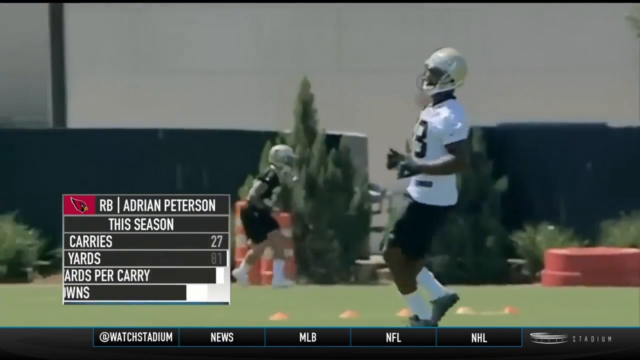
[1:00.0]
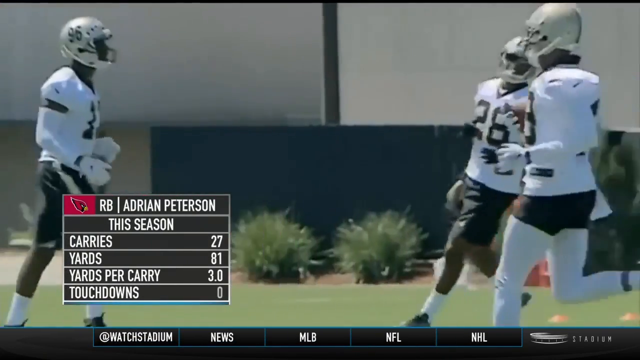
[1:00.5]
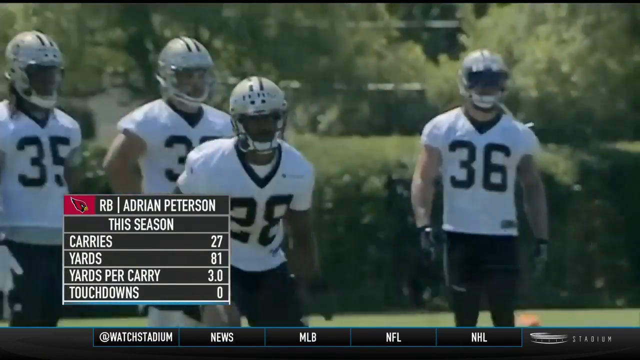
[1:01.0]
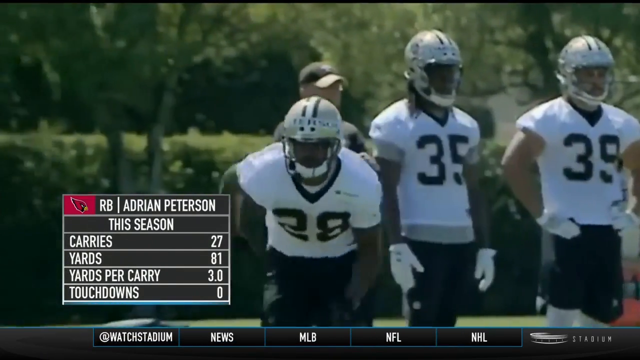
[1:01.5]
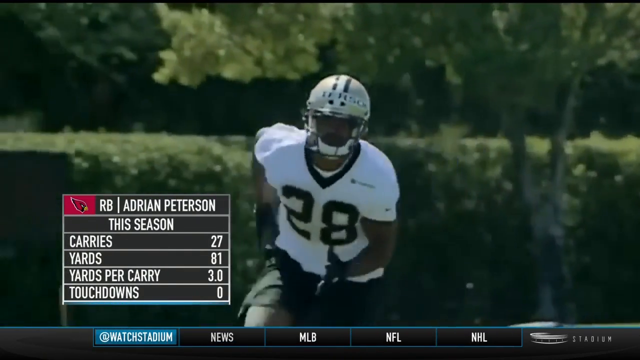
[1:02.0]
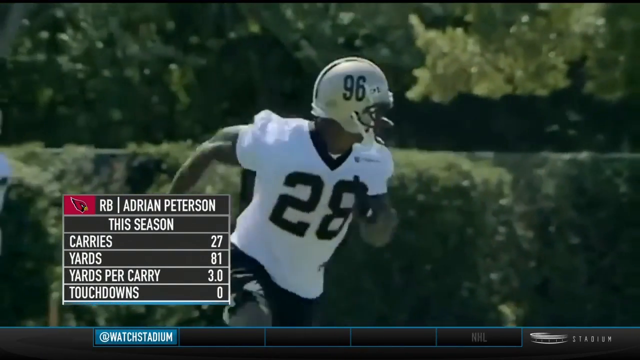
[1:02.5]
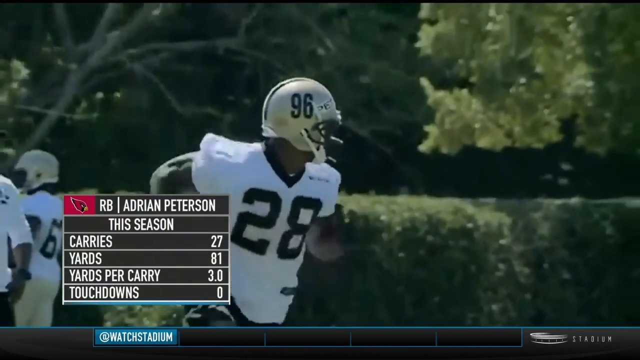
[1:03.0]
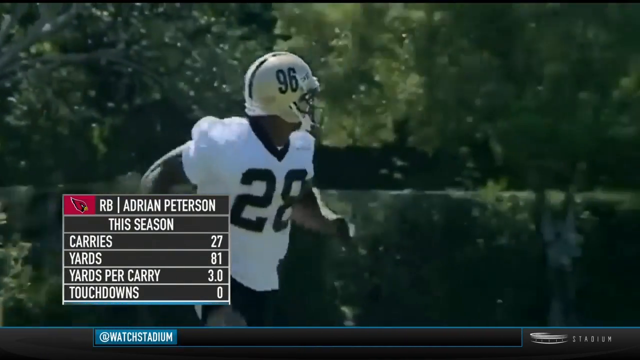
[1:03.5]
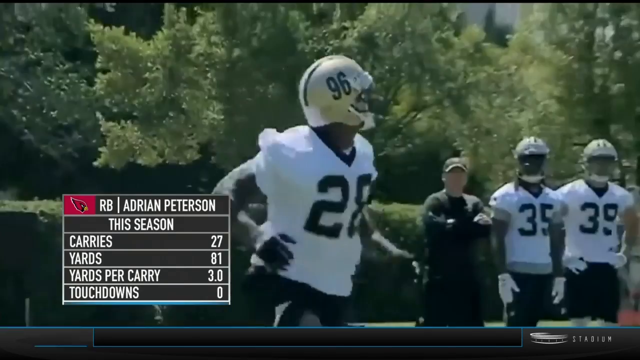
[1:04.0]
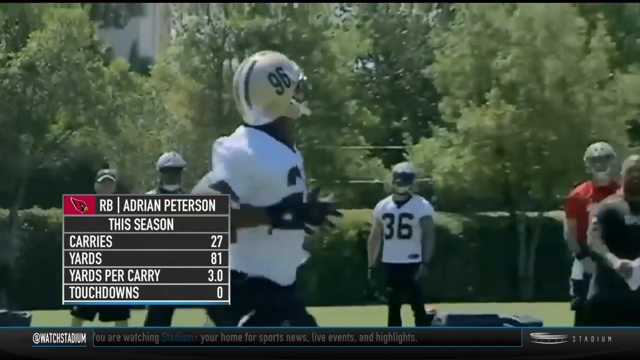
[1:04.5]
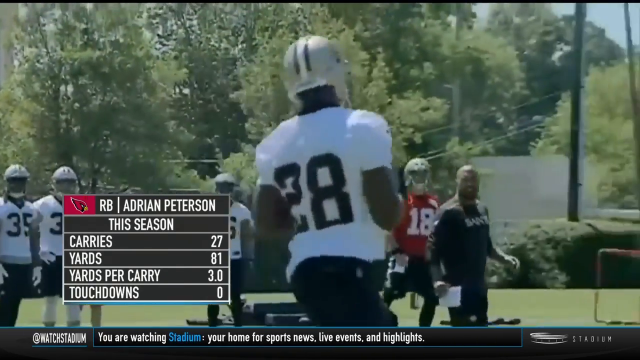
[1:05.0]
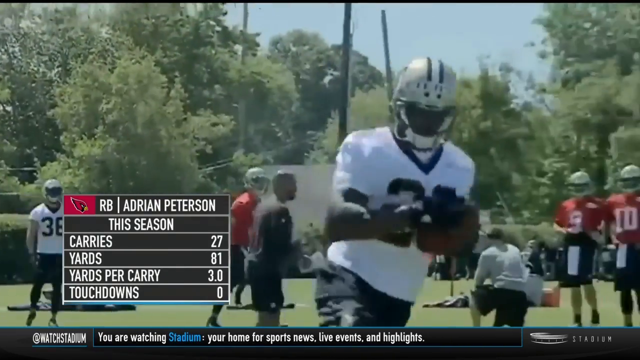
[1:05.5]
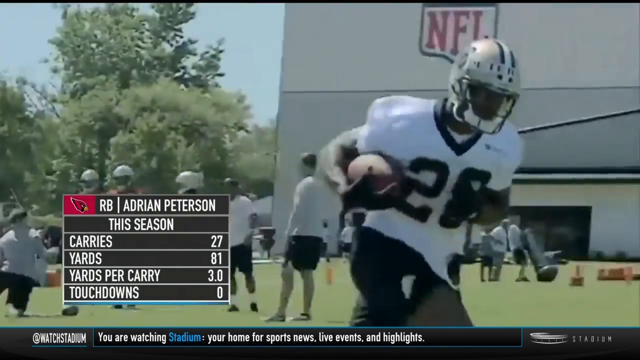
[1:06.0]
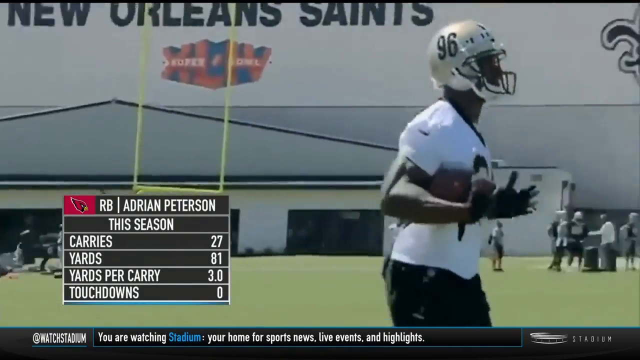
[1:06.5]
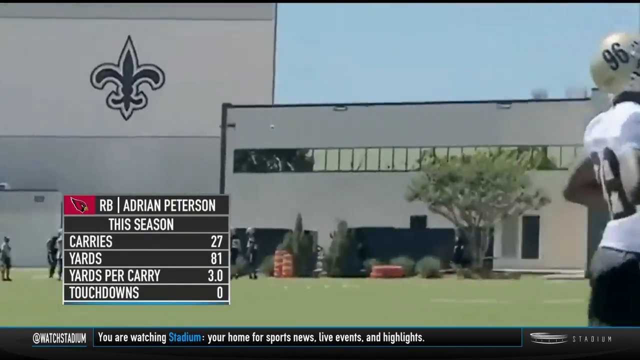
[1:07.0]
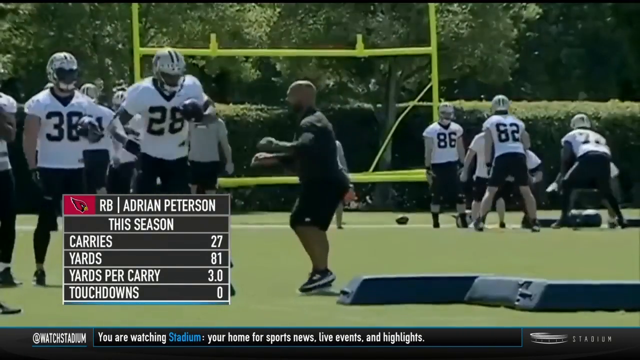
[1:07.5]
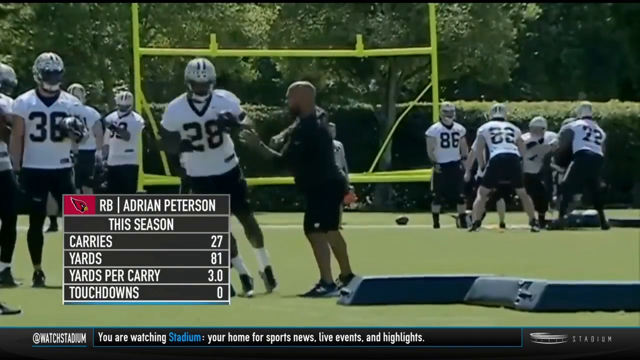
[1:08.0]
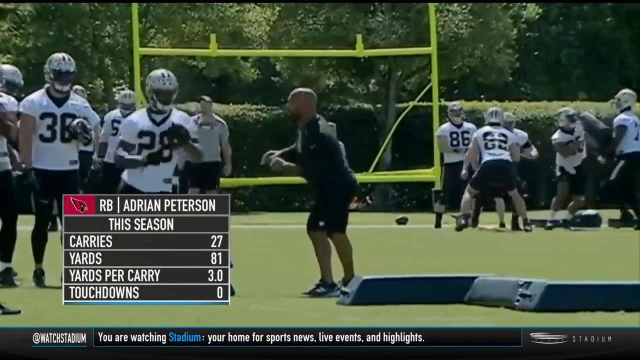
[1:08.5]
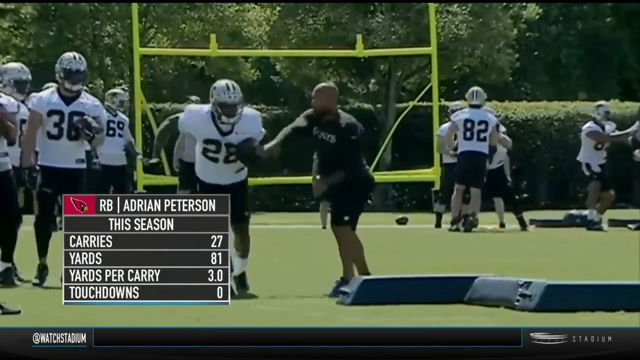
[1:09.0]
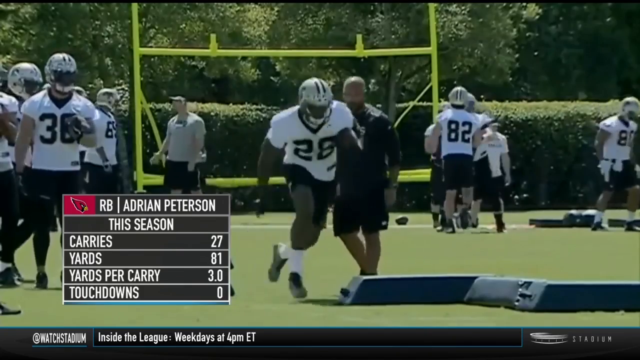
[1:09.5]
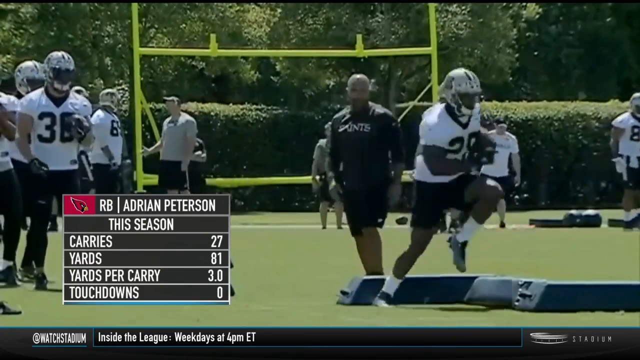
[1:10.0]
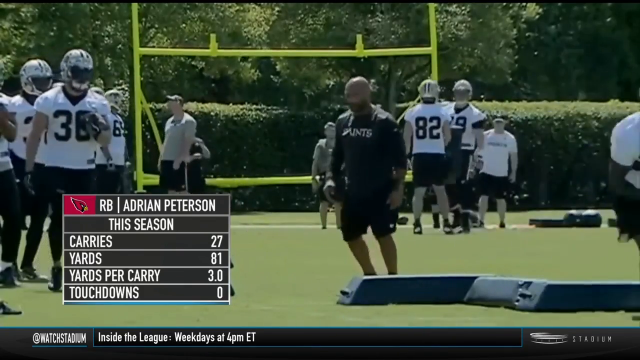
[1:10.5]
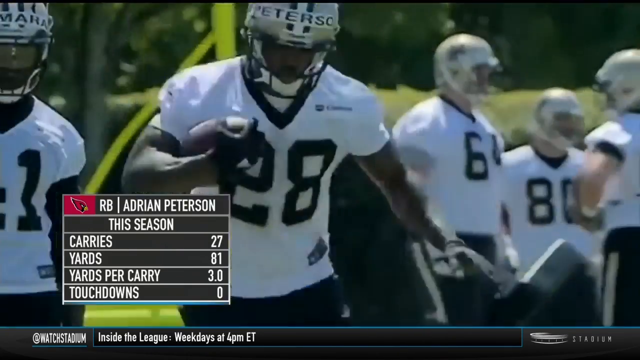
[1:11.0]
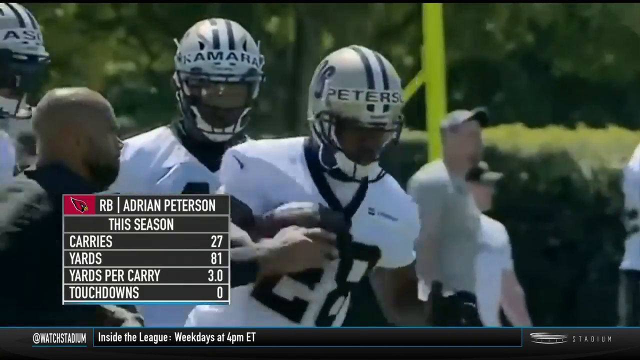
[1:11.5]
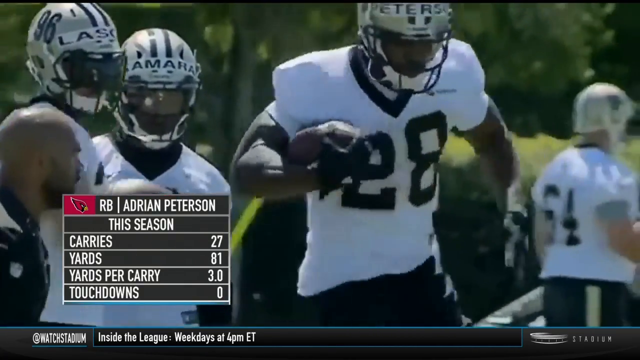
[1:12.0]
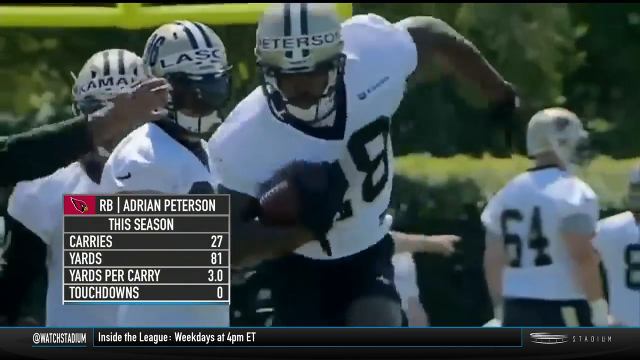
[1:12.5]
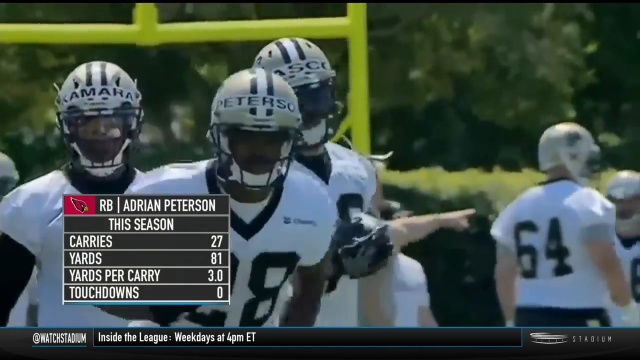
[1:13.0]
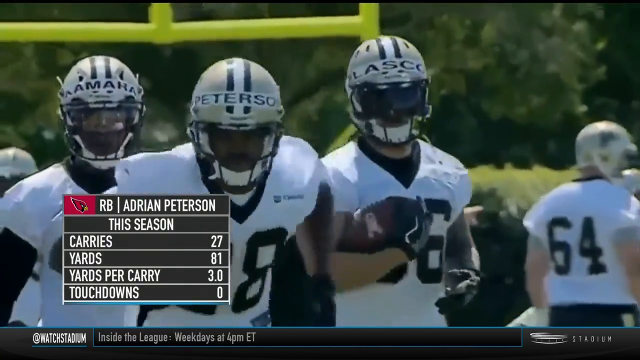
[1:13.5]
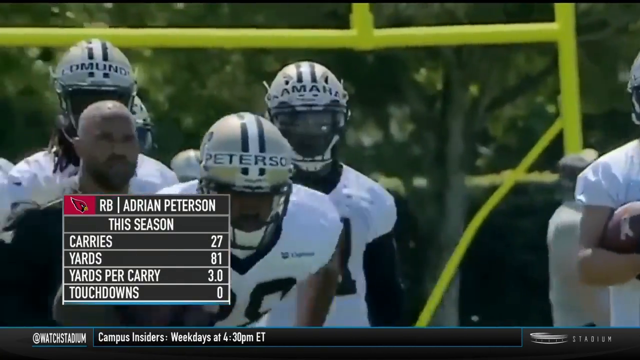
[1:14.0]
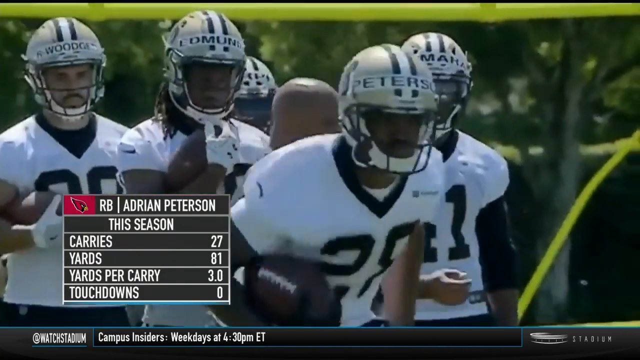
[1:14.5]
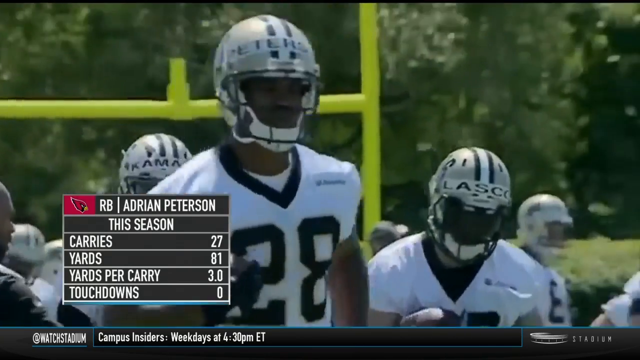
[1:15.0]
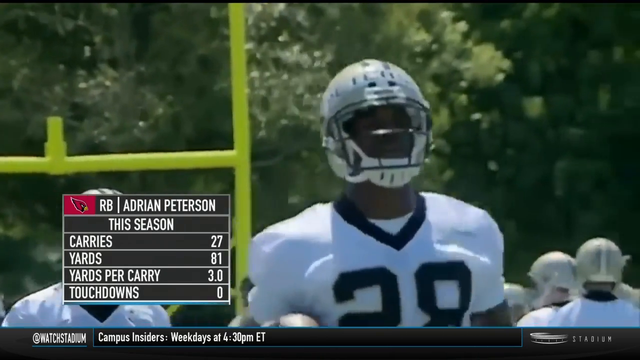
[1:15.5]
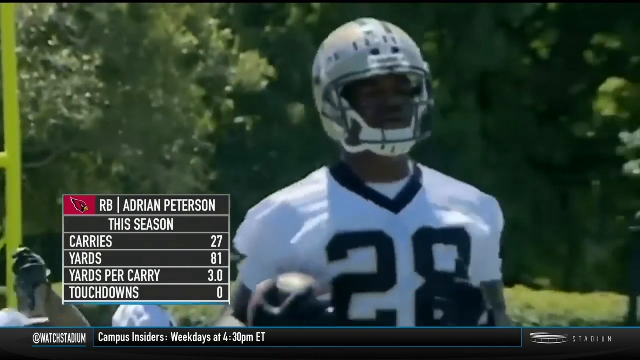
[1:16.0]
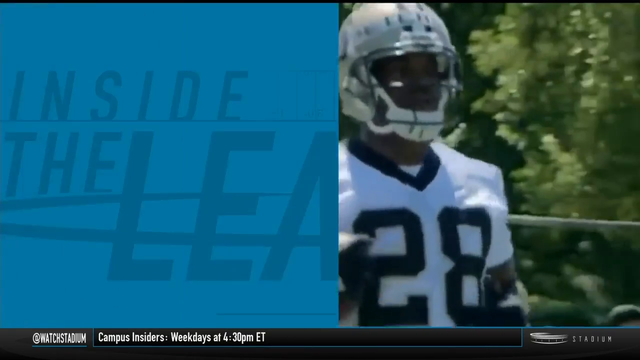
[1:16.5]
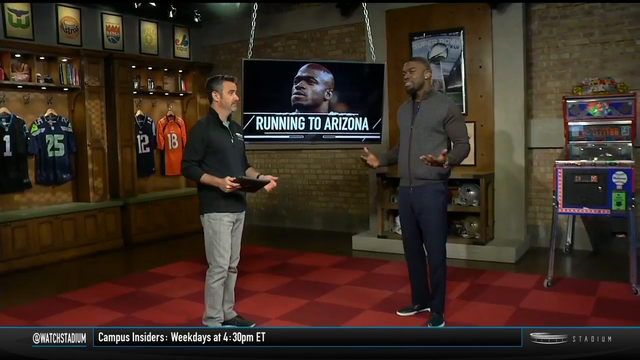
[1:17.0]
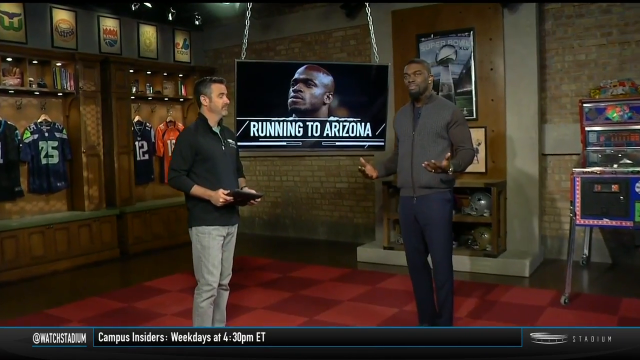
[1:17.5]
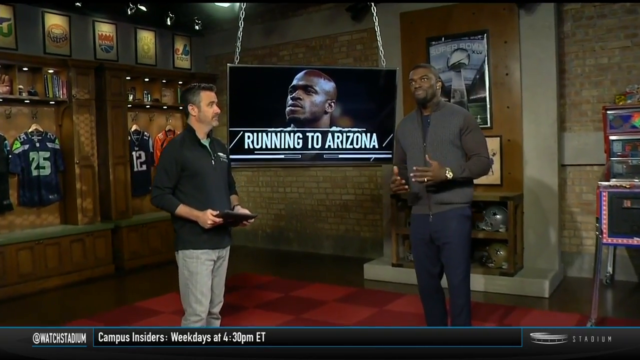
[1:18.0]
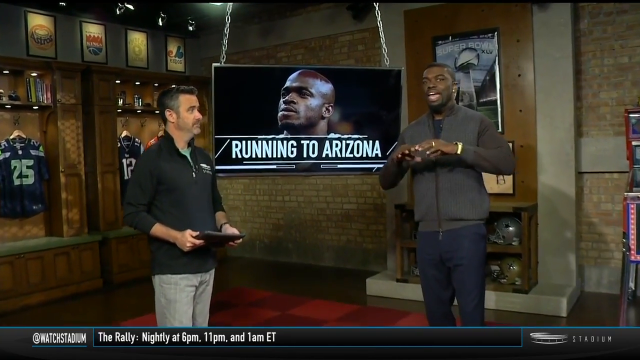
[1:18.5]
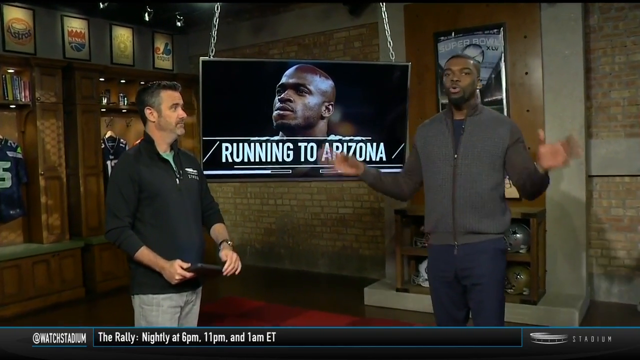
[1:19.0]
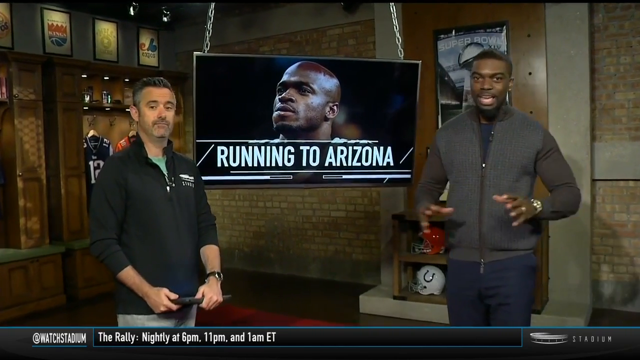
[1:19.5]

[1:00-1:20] His stats come up in the lower left over the practice footage, in a black text box with the red Cardinals logo. White text reads "RB Adrian Peterson," then "this season," then carries 27, yards 81, yards per carry 3.0 and touchdowns zero. He catches a ball in practice and does some jumping drills, jumping up with his knees to his chest and running in place. Small white text at the bottom shows different things throughout. The video then moves away from the practice footage to what appears to be a transition graphic where "inside the league" sweeps across the screen. It returns to the two commentators; the TV screen between them now shows the same player, apparently his face, and underneath, over his neck, white all caps on a black background read "running to Arizona."